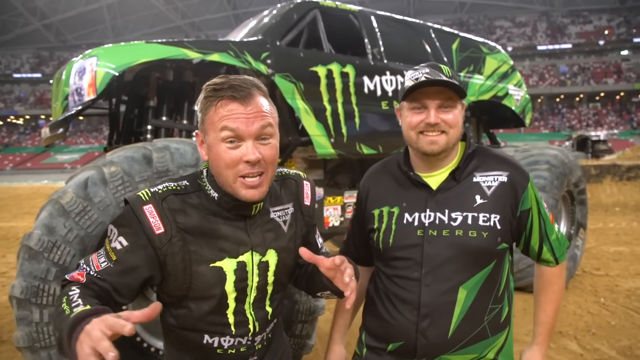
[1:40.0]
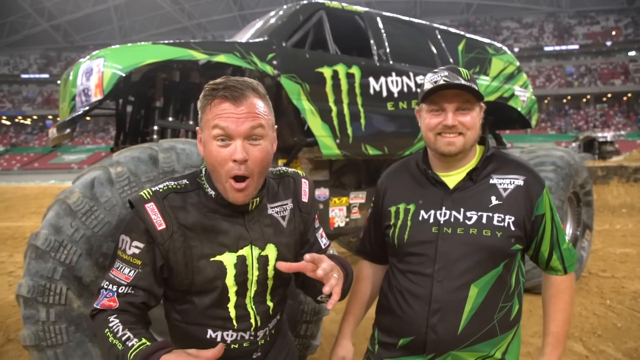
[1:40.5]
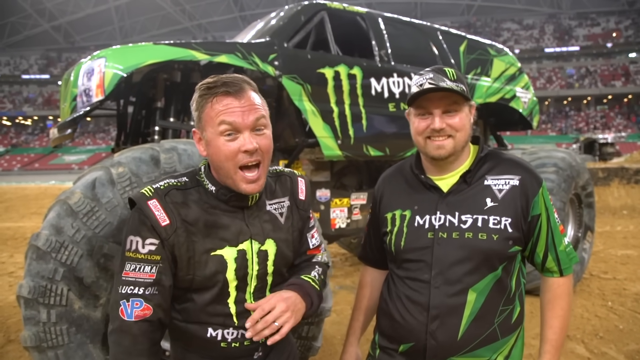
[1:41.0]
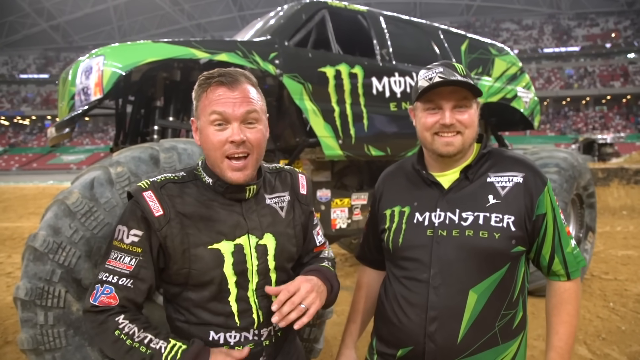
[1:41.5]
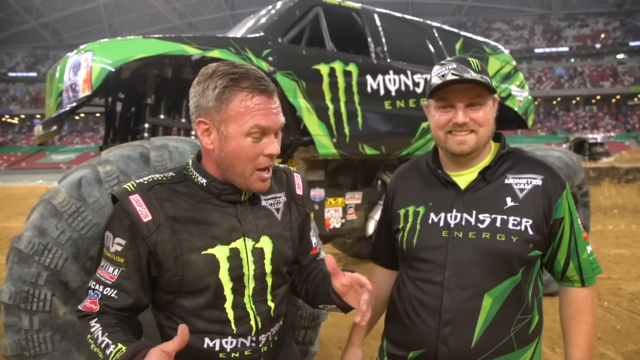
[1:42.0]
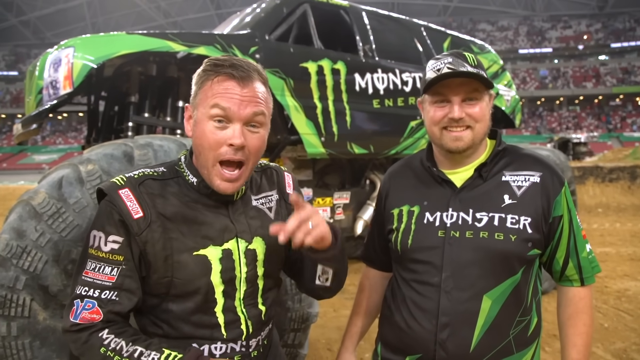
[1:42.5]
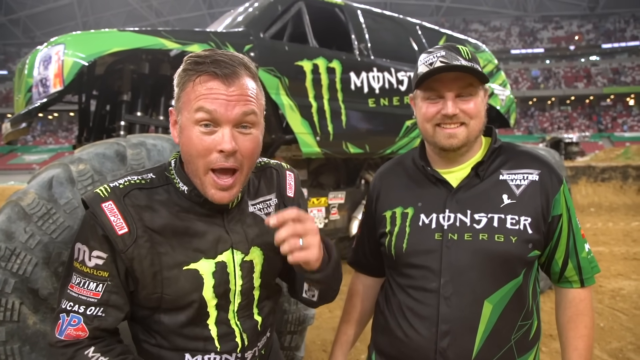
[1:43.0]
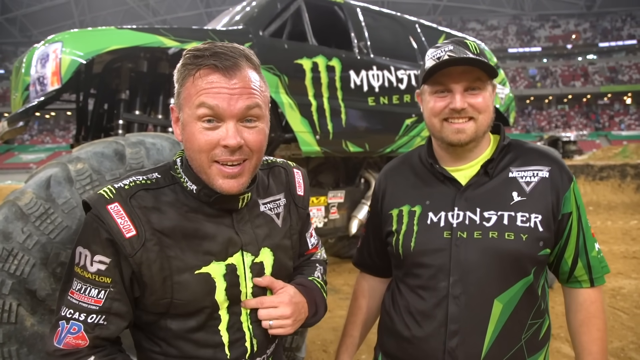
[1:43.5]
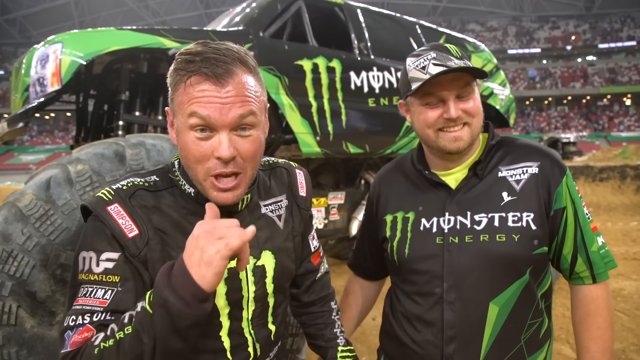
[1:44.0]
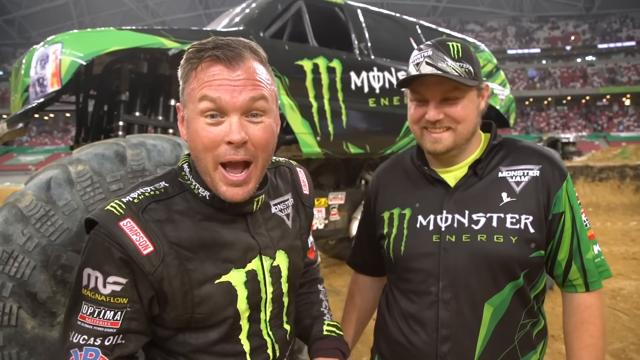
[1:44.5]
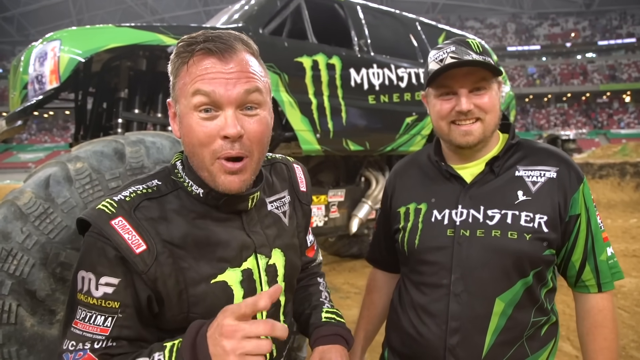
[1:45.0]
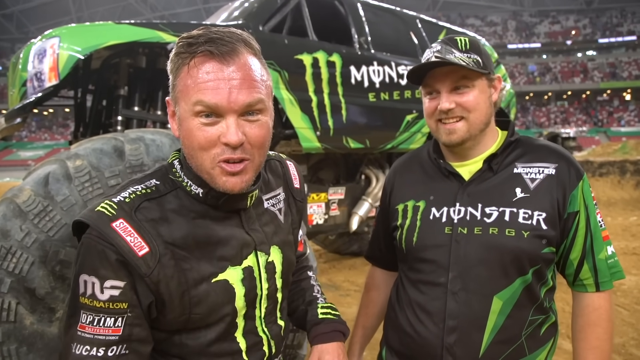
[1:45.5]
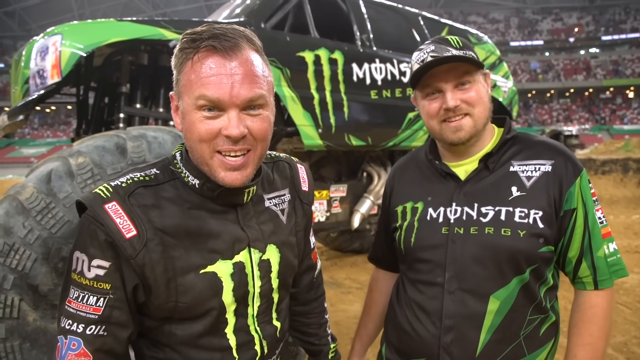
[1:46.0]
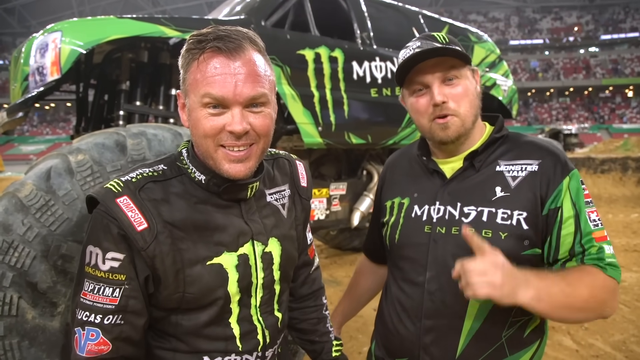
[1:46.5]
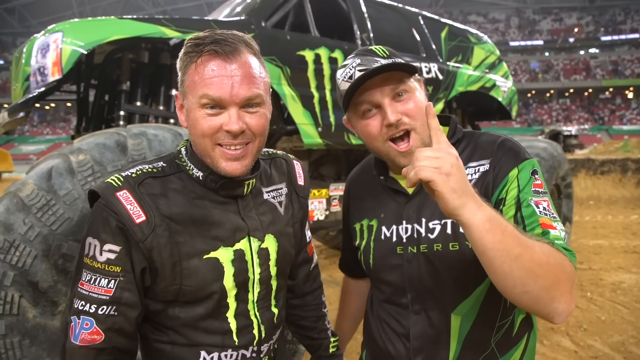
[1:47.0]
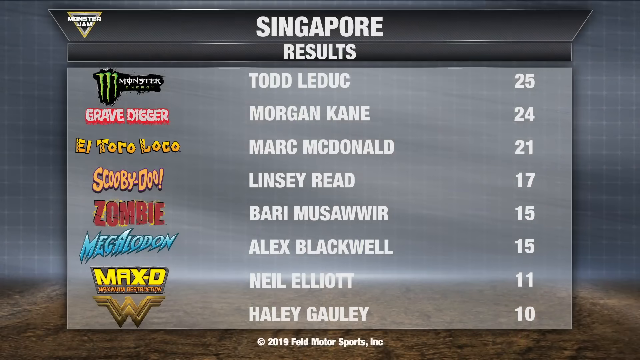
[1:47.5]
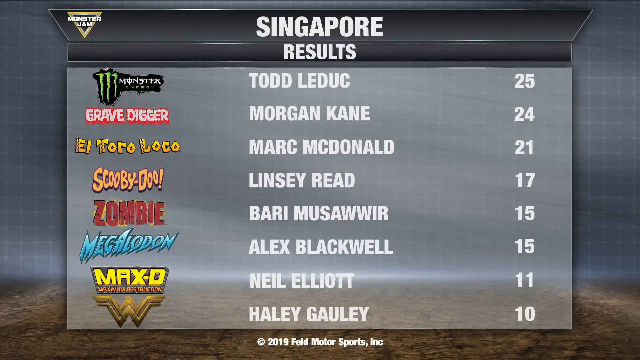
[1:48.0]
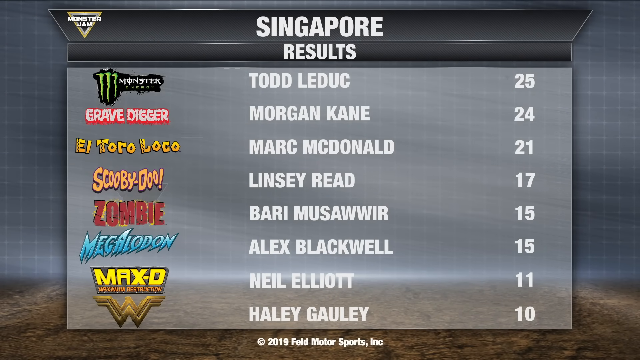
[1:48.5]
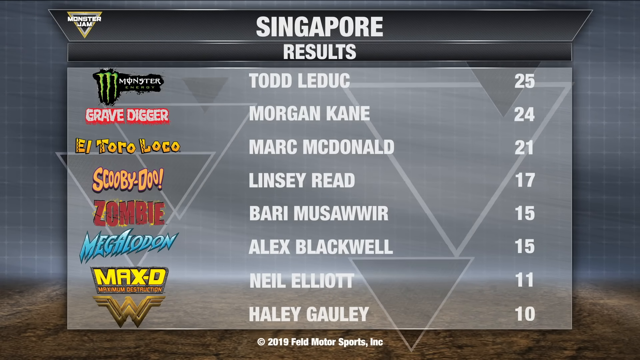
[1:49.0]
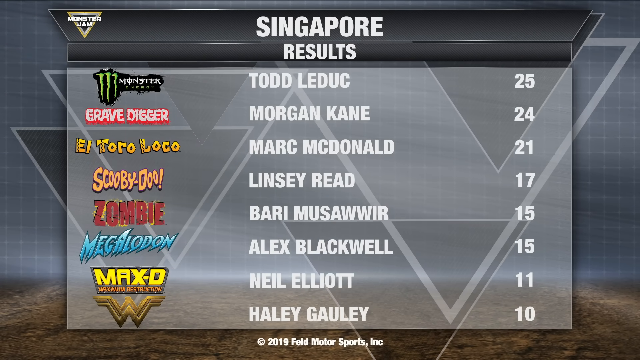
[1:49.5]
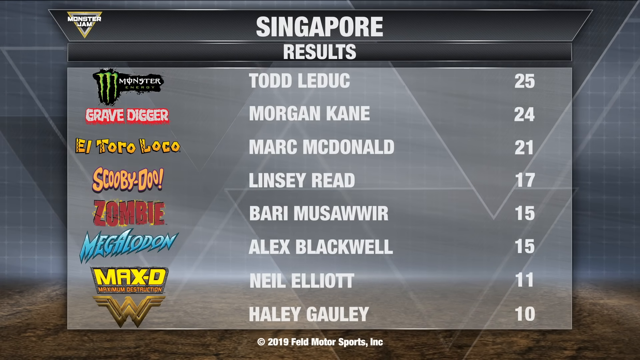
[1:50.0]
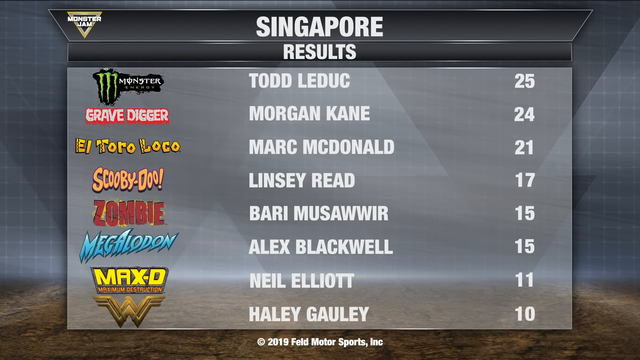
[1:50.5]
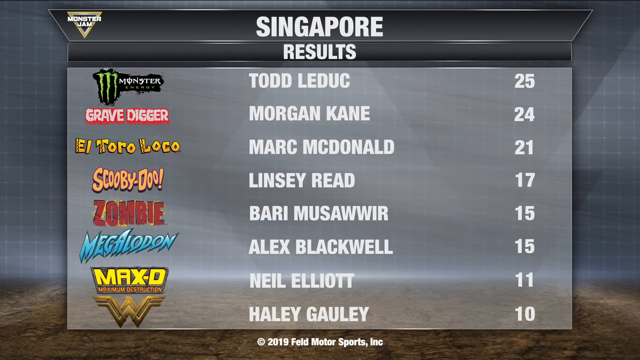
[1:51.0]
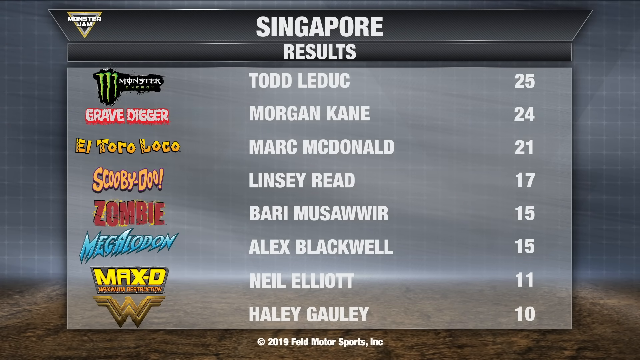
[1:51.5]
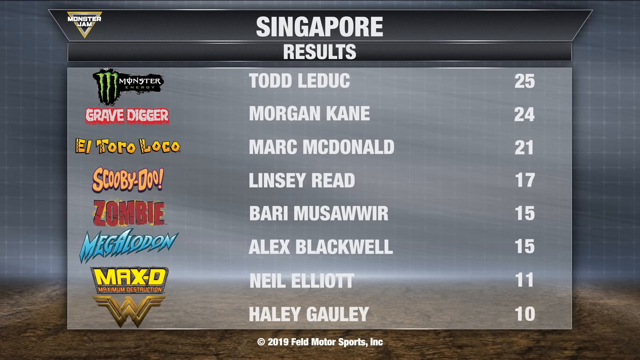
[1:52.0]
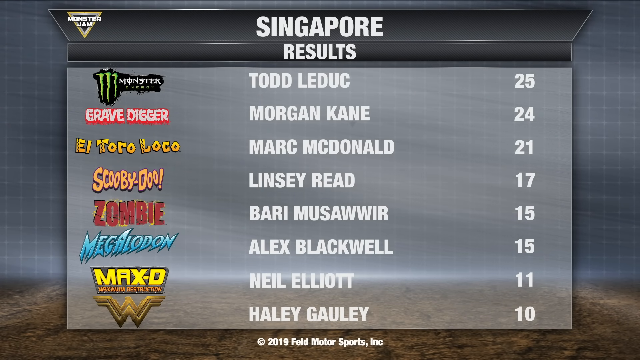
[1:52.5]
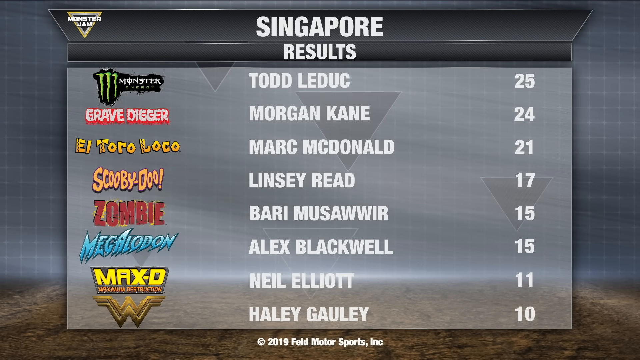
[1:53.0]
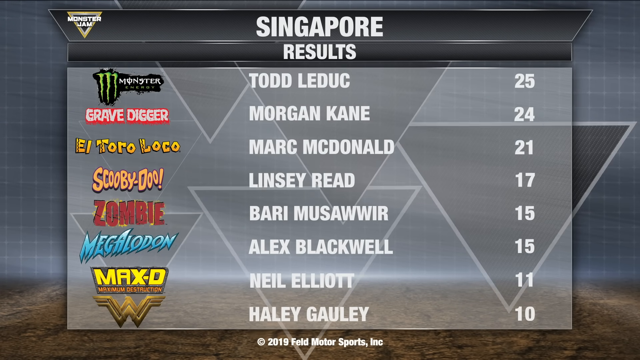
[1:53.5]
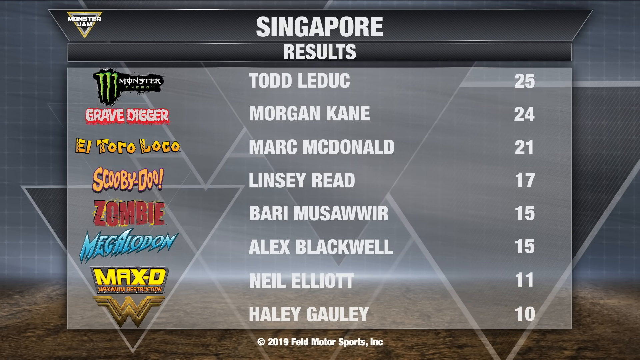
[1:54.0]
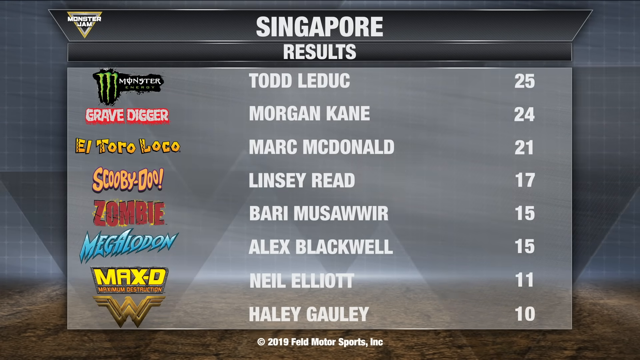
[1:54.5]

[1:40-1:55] The results are shown, listing who won. The winner has 25 points. Grave Digger, with driver Morgan Kane, has 24 points. El Toro Loco, driven by Max Donald, has 21 points. Scooby-Doo has 17 points, two more entries have 15 points each, another has 11 points, and Harley Cowley has 10 points. The video also shifts to show the city and people moving very fast.